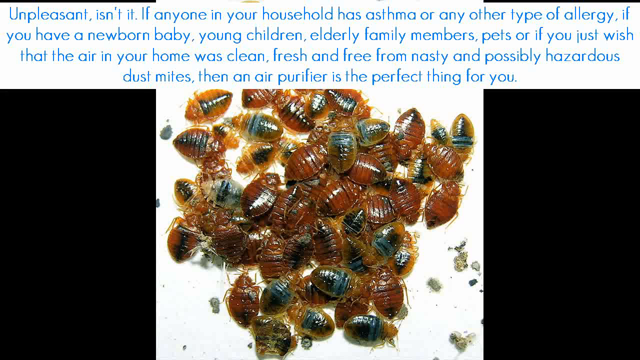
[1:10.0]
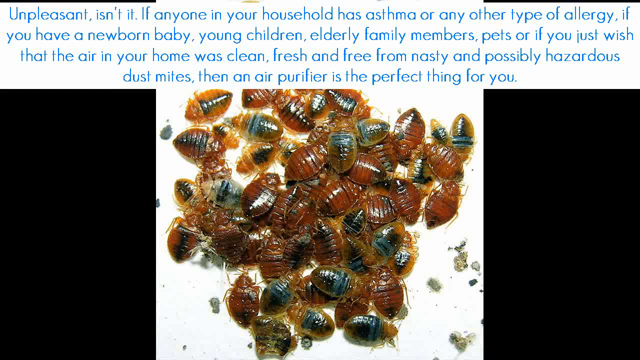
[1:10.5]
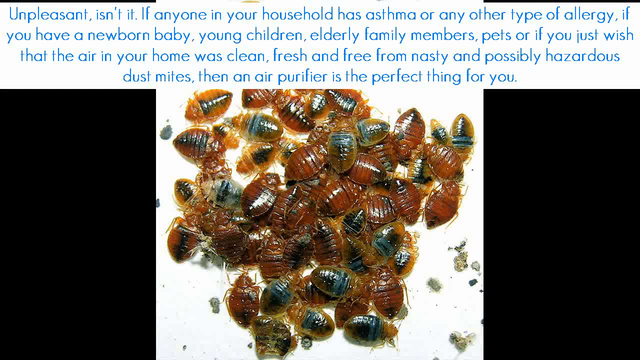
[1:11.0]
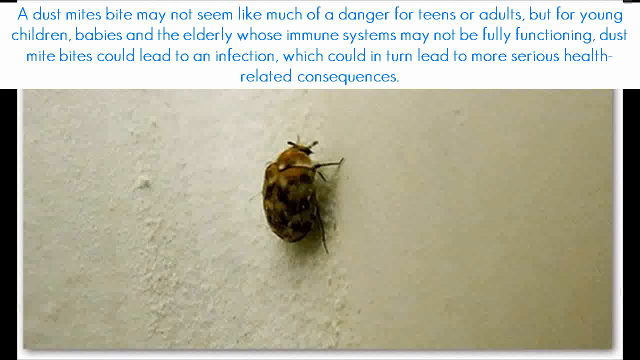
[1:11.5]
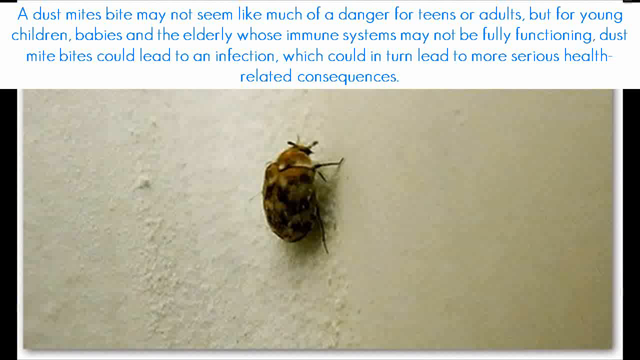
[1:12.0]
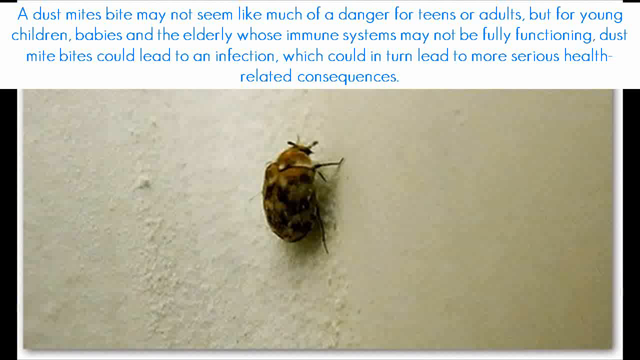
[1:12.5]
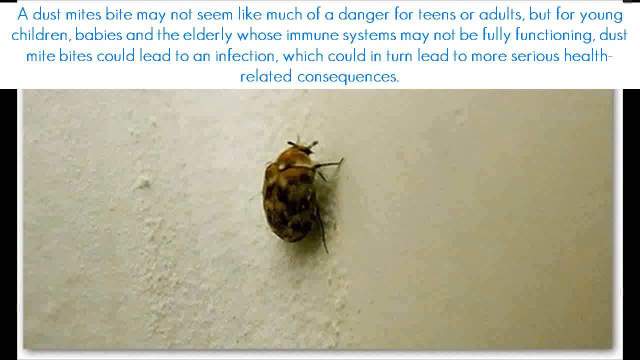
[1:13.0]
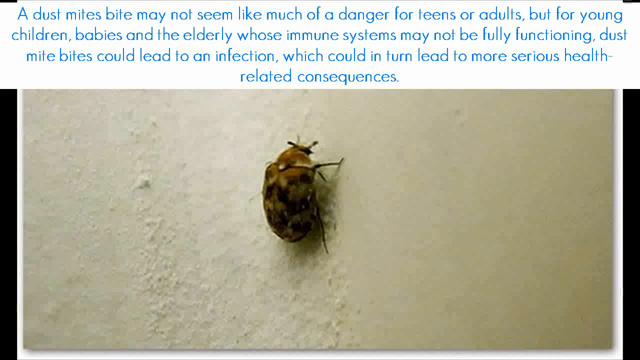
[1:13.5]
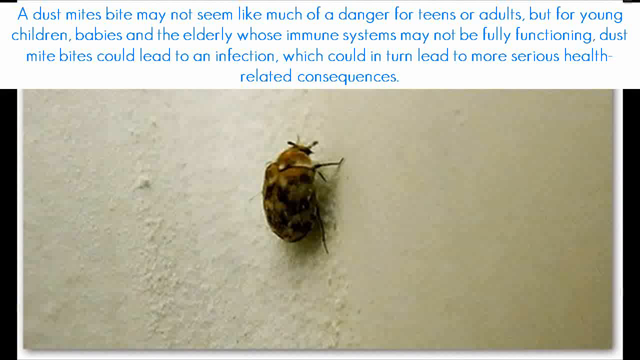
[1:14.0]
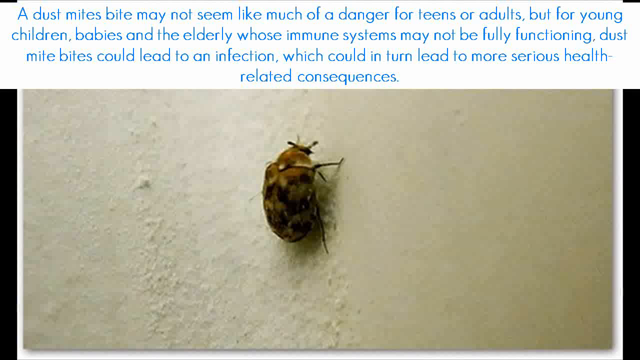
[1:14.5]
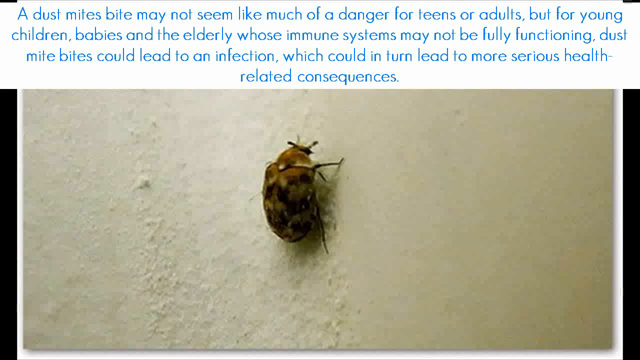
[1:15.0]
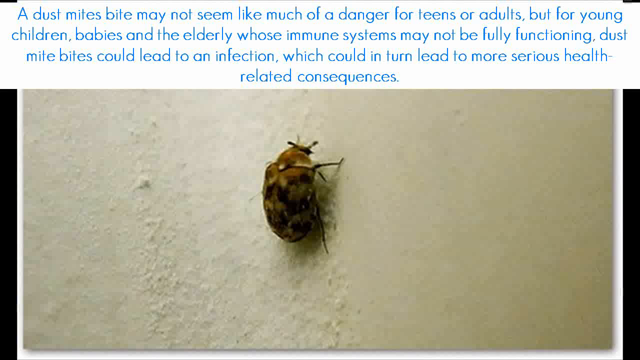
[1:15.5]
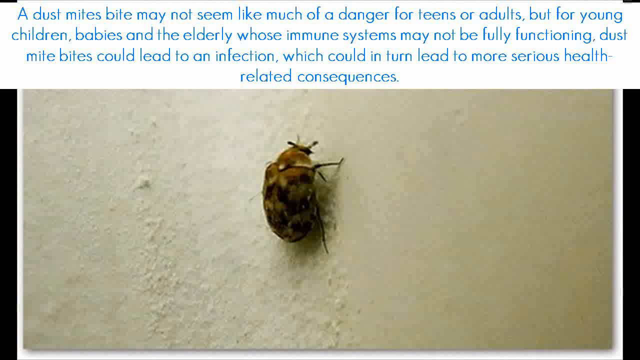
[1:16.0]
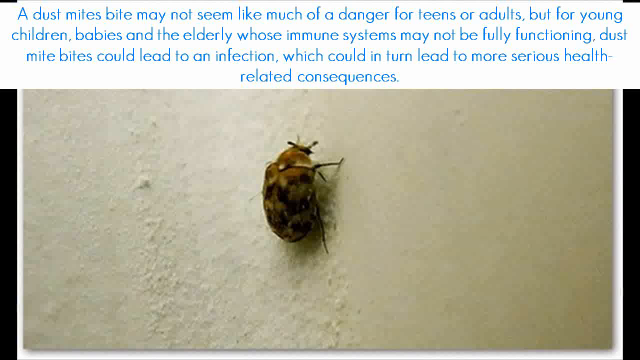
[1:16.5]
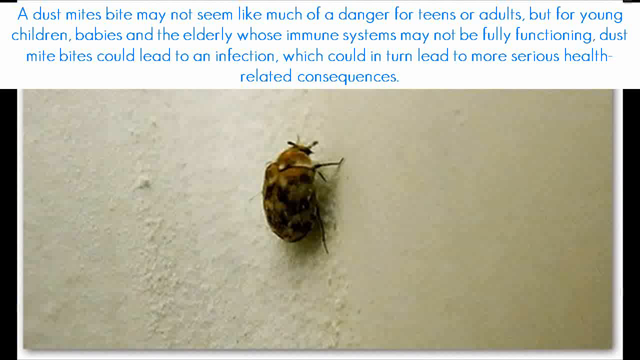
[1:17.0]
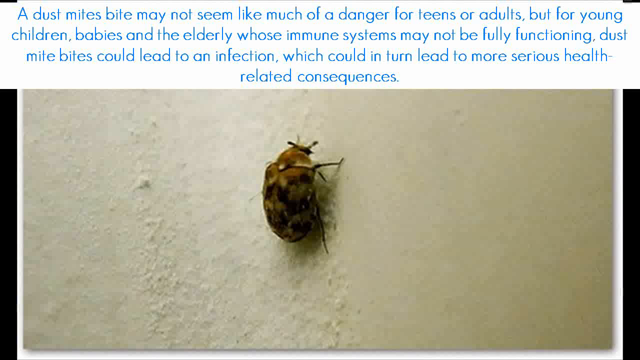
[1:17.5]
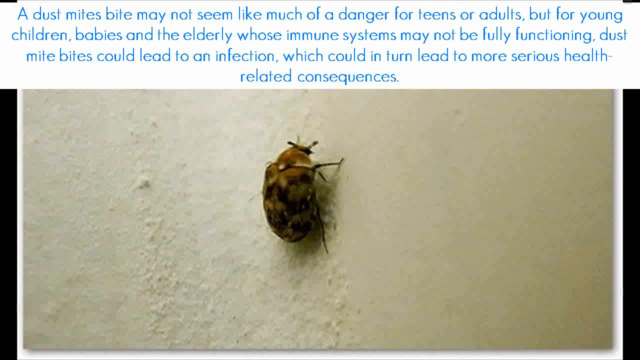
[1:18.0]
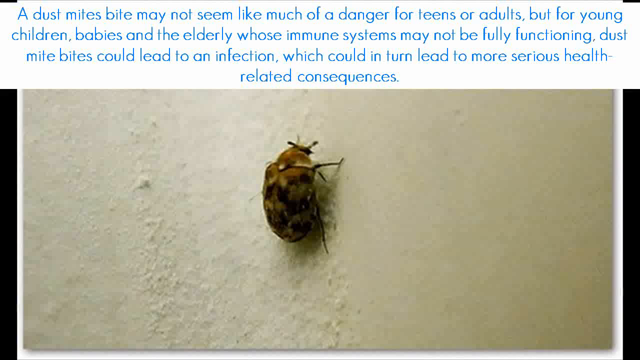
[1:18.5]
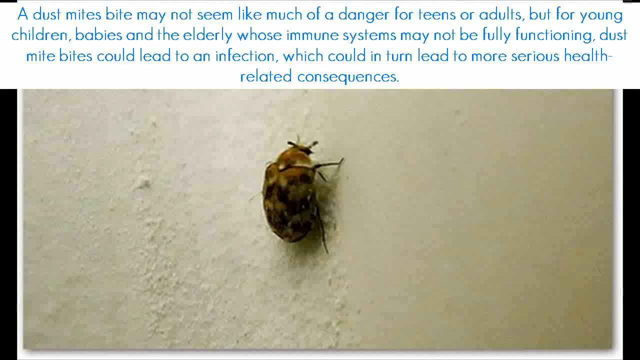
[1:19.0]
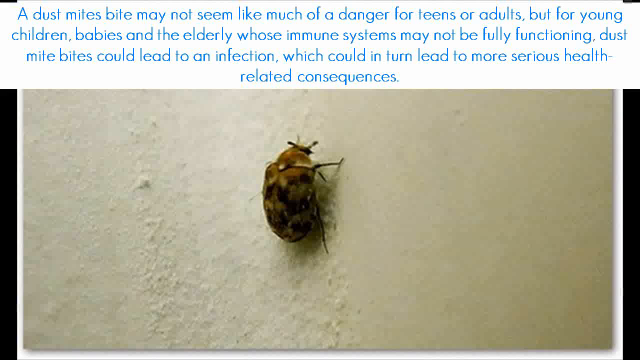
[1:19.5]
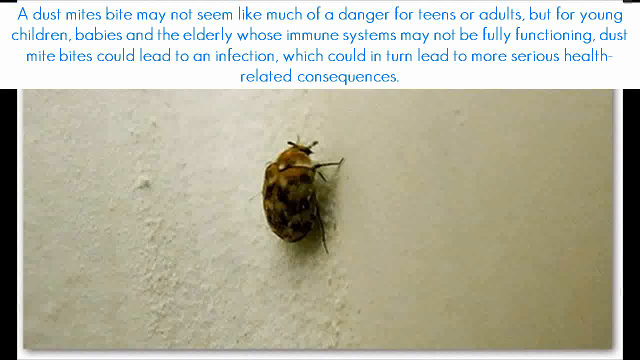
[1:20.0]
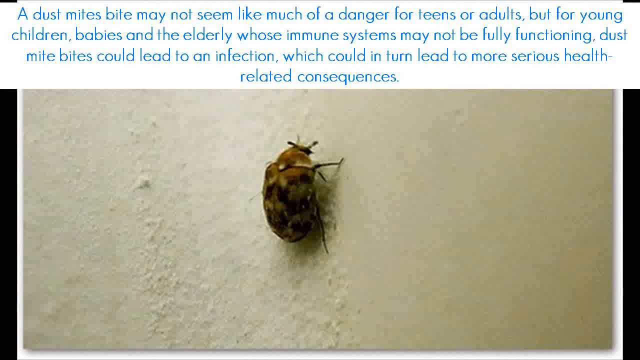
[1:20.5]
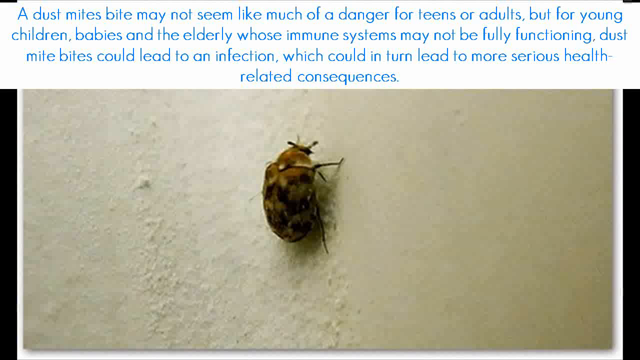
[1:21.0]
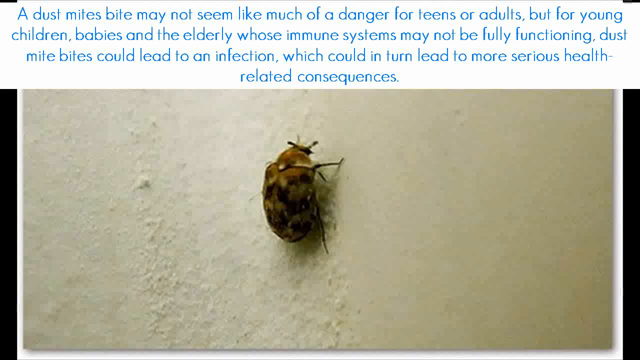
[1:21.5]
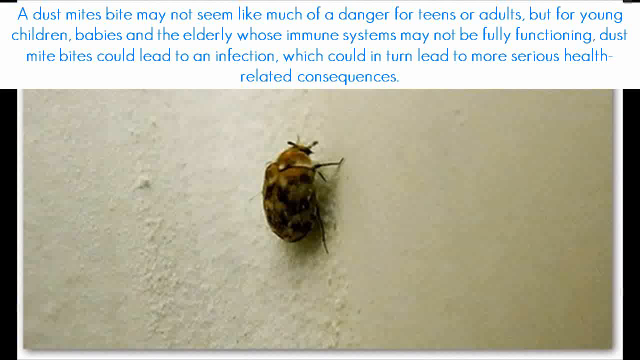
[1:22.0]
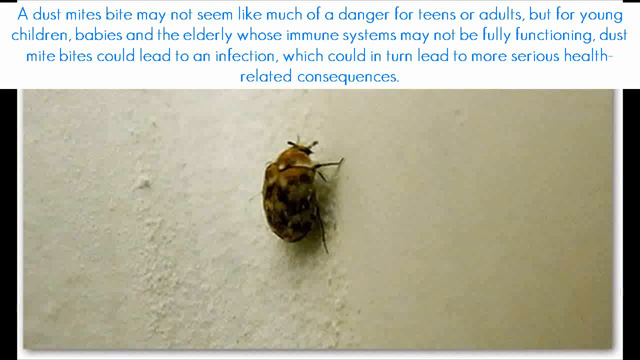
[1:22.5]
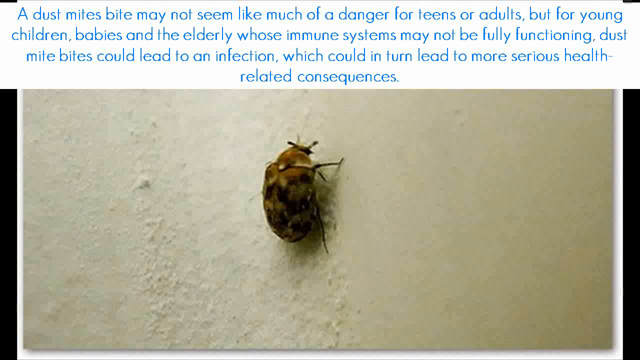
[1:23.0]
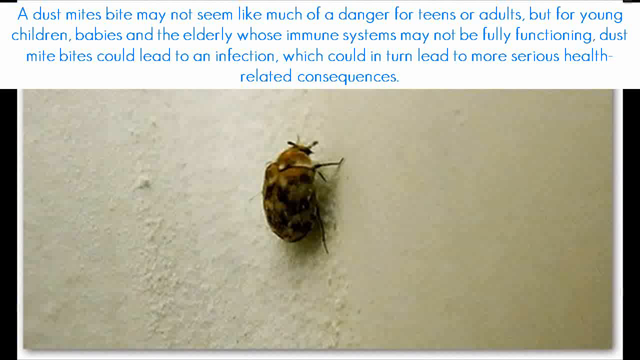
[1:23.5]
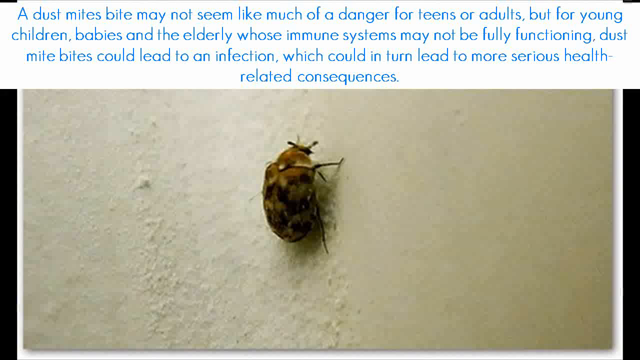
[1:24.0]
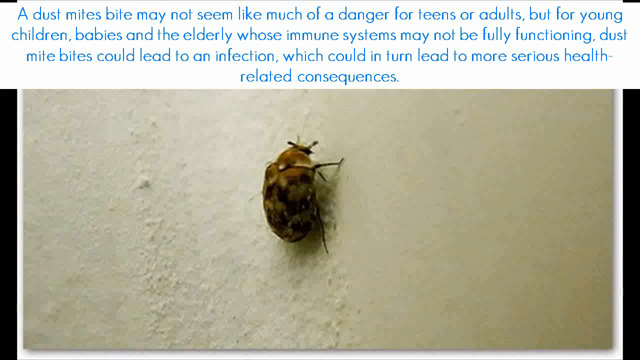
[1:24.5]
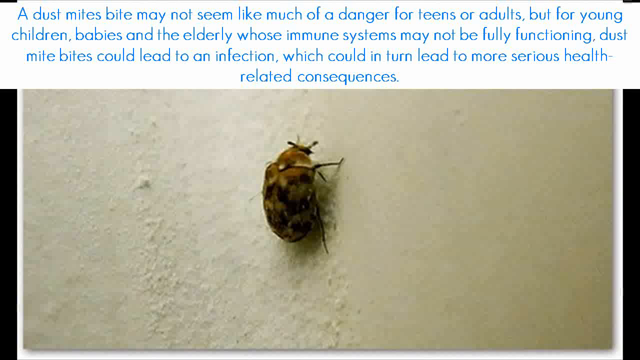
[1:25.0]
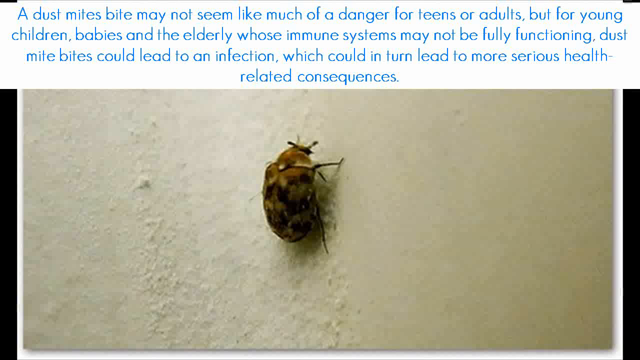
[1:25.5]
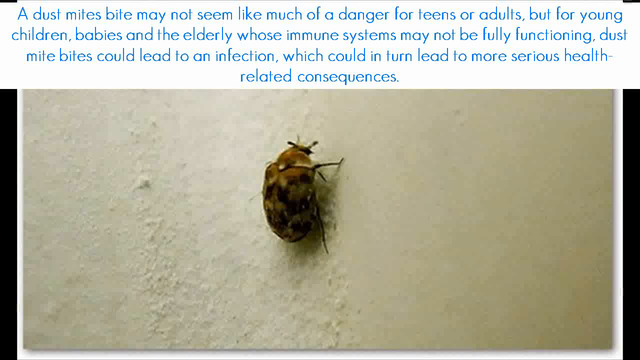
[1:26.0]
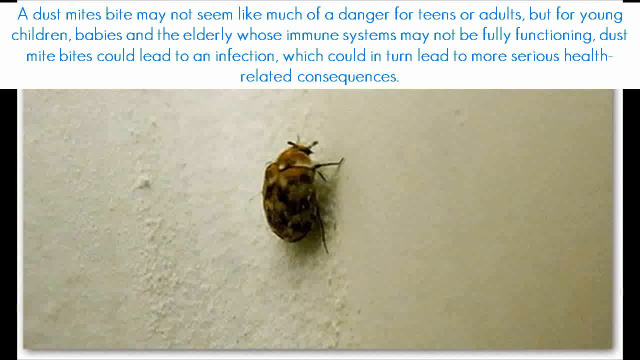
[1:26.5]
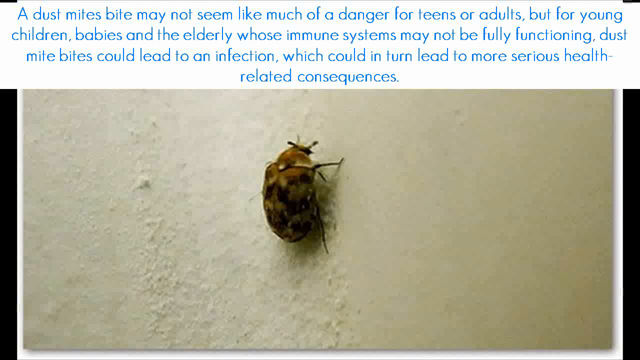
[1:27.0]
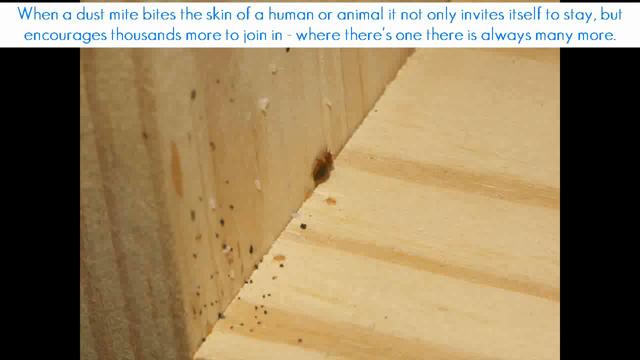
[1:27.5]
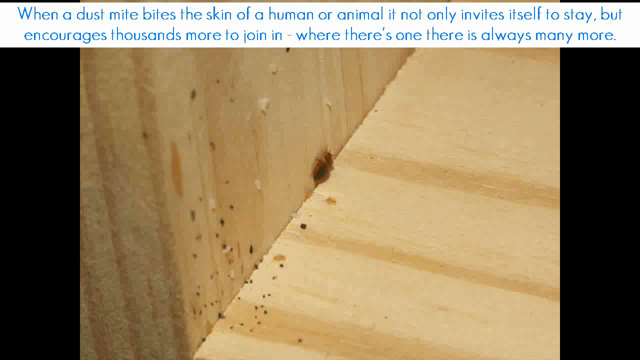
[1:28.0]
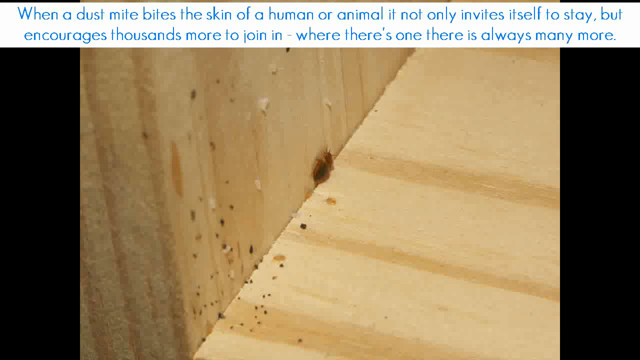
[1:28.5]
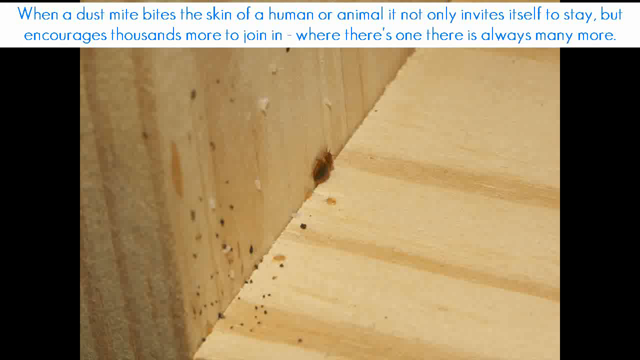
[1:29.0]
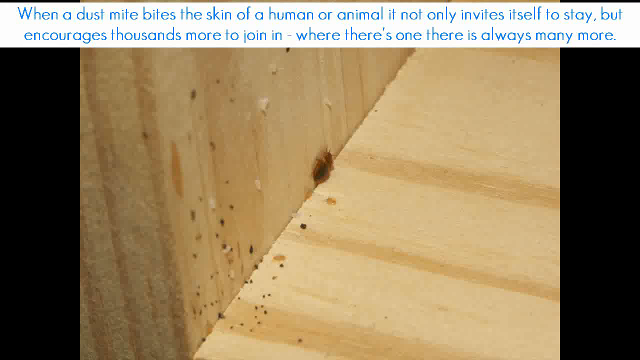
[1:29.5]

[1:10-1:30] The video moves quickly, passing over one slide very fast. Text says a normal healthy adult may not notice a problem with dust mites, but the elderly, the young and the immune-compromised could suffer infections from them. It also mentions asthma and other types of allergies, and wishing your home were cleaner, and says maybe an air purifier is the perfect thing for you. More pictures of dust mites are shown, but these do not look the same as the one shown earlier.